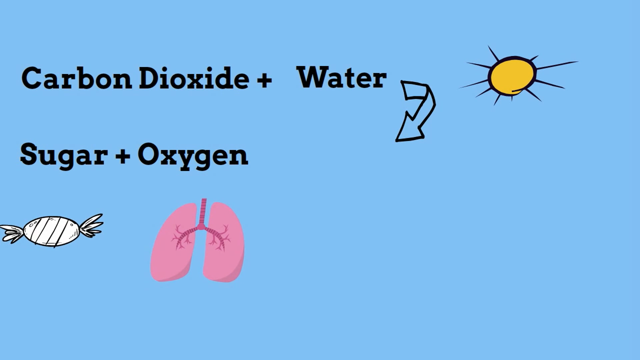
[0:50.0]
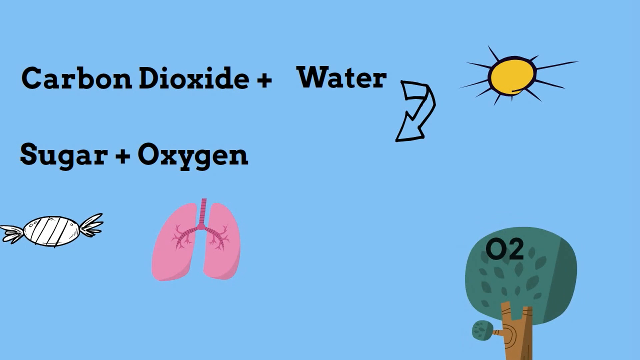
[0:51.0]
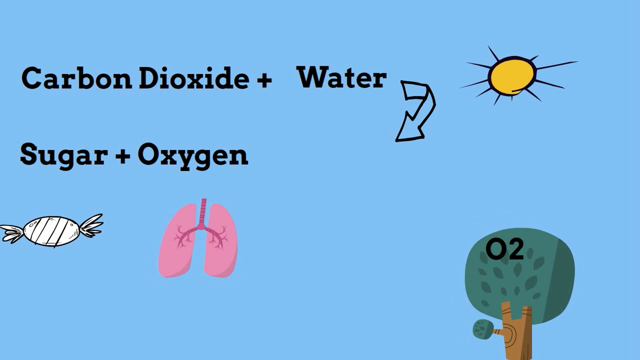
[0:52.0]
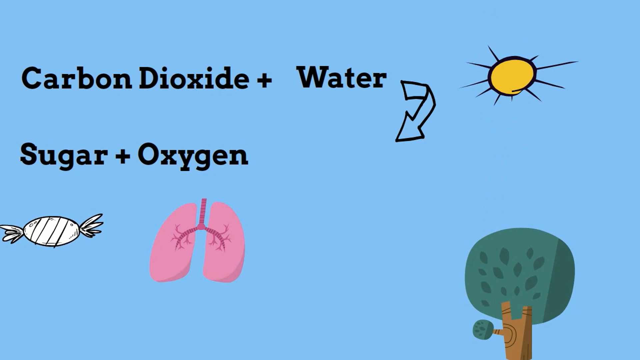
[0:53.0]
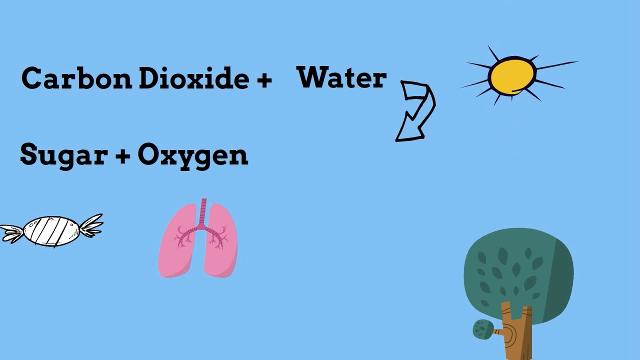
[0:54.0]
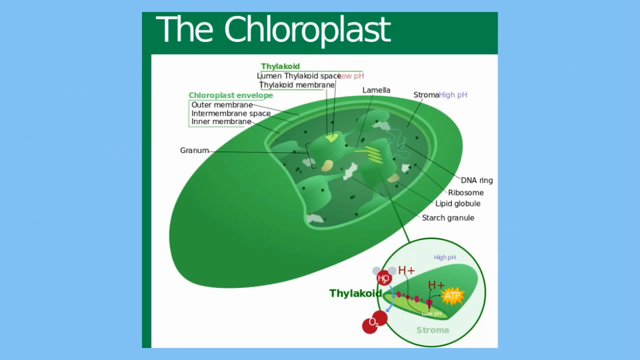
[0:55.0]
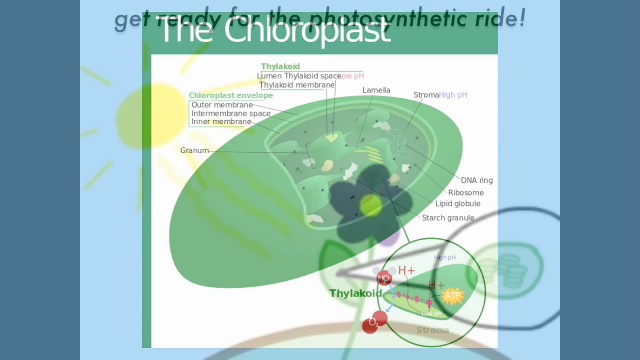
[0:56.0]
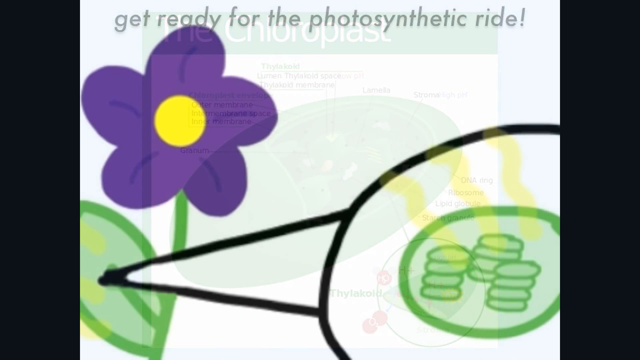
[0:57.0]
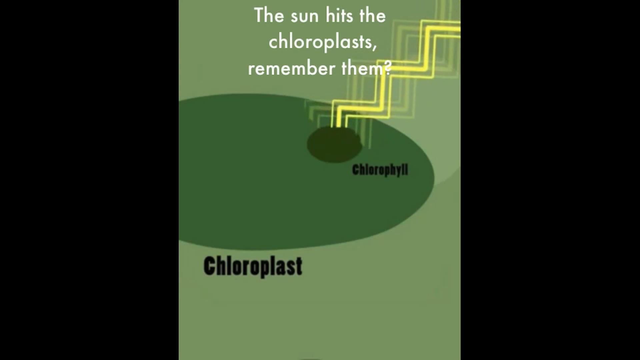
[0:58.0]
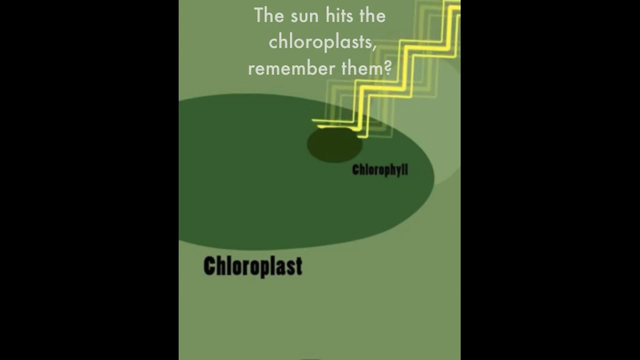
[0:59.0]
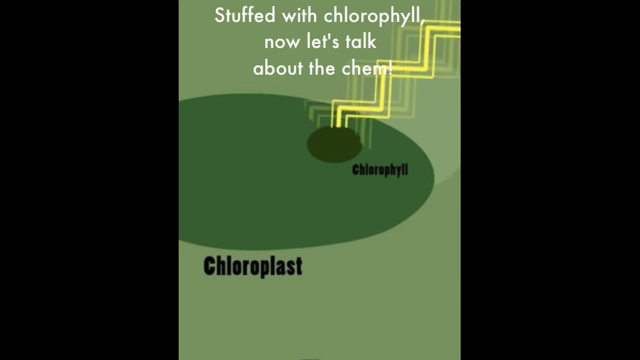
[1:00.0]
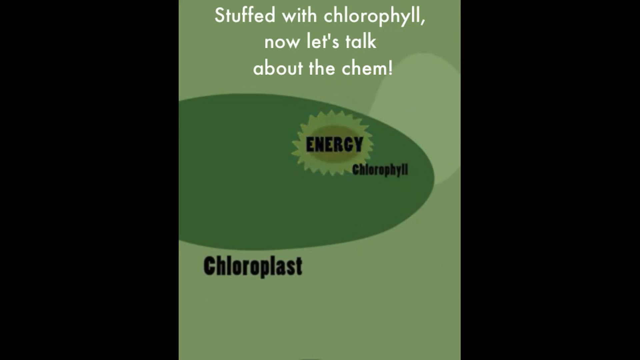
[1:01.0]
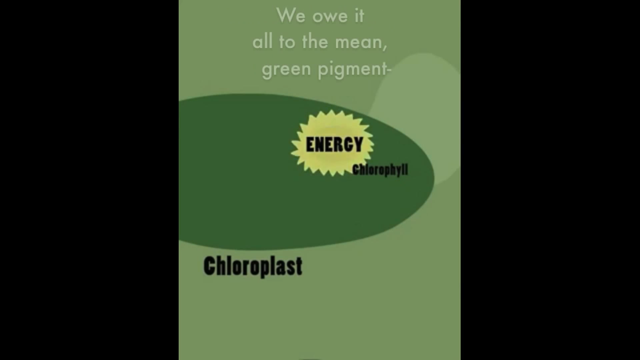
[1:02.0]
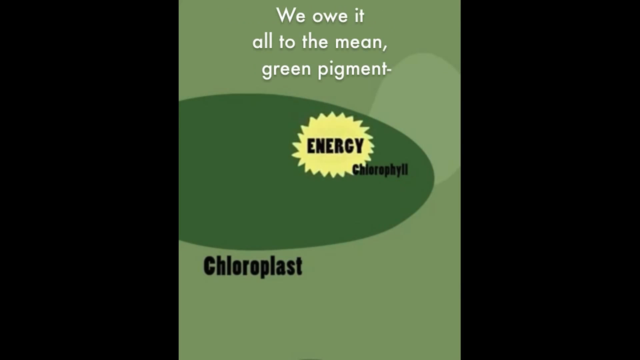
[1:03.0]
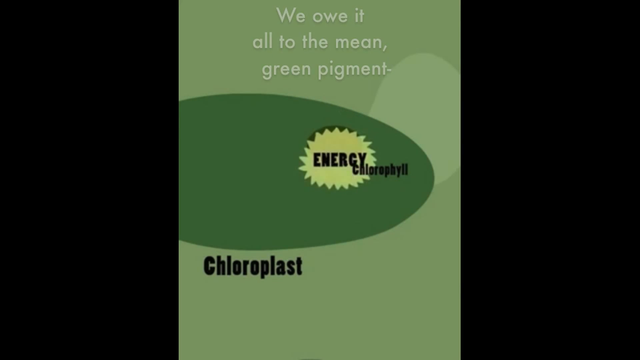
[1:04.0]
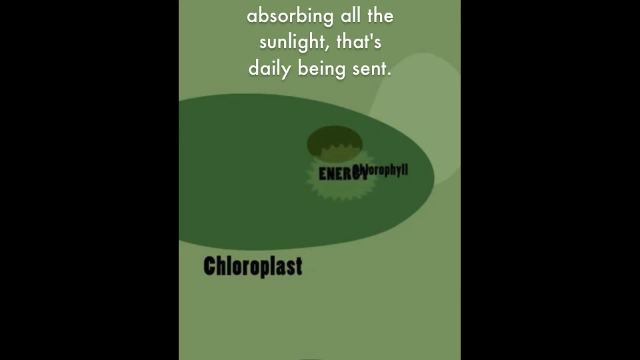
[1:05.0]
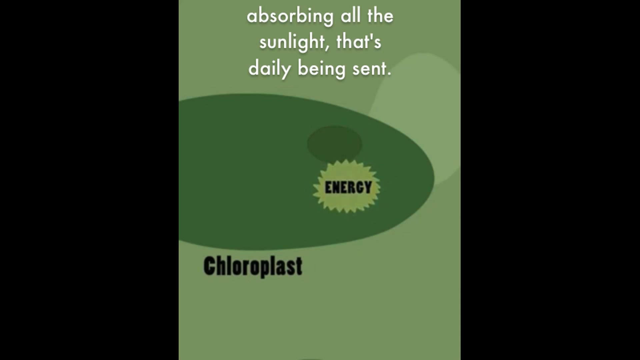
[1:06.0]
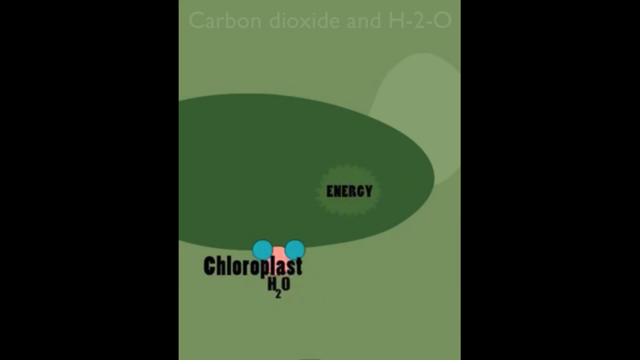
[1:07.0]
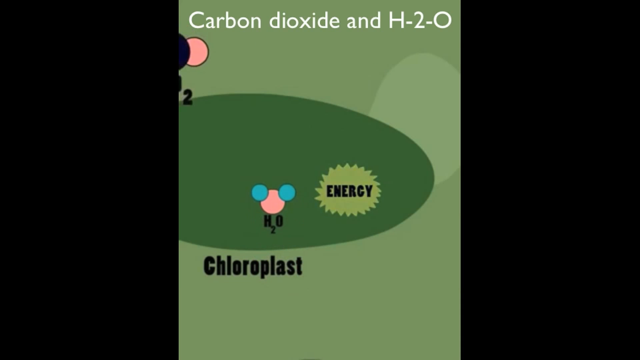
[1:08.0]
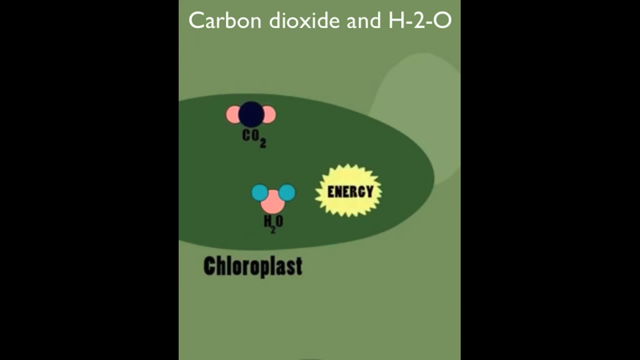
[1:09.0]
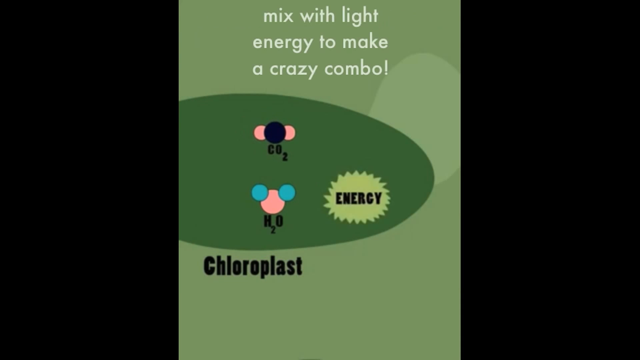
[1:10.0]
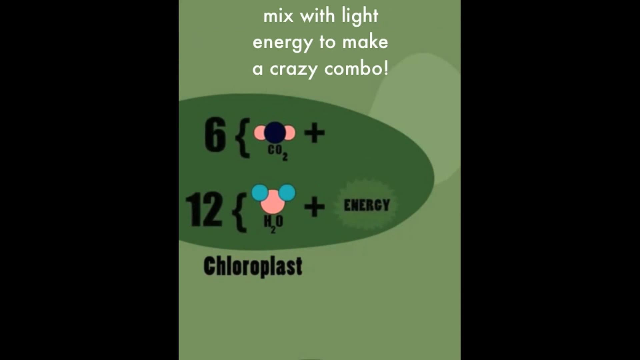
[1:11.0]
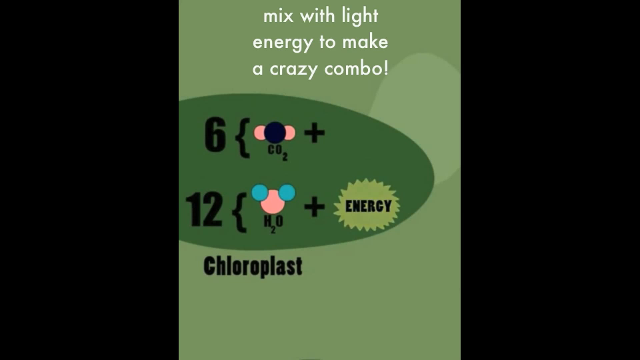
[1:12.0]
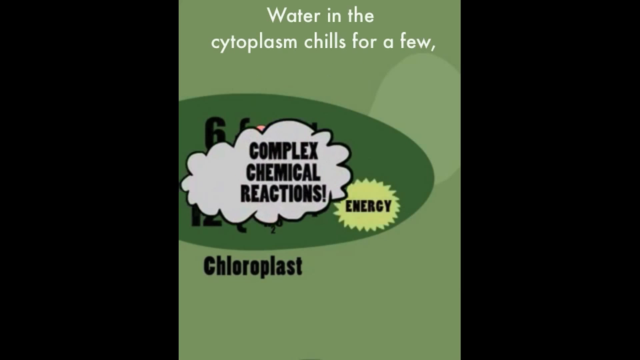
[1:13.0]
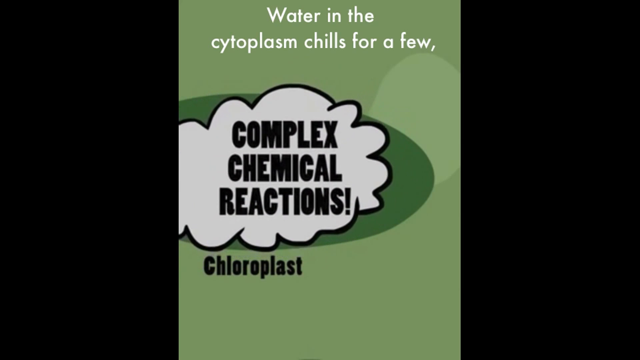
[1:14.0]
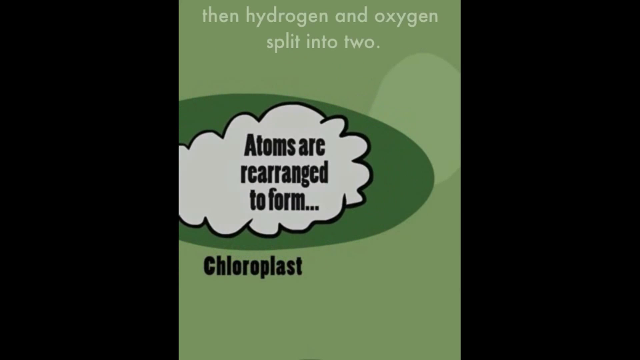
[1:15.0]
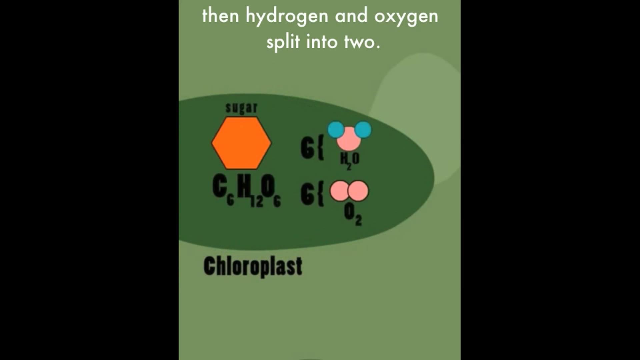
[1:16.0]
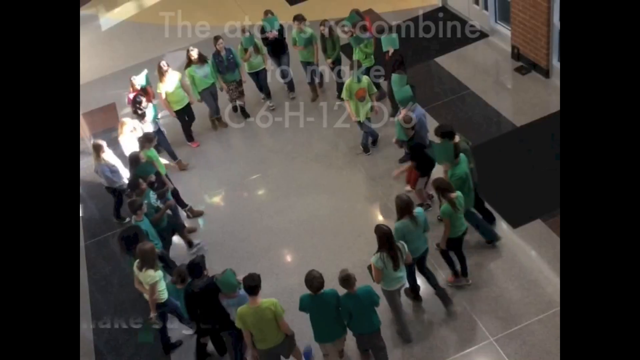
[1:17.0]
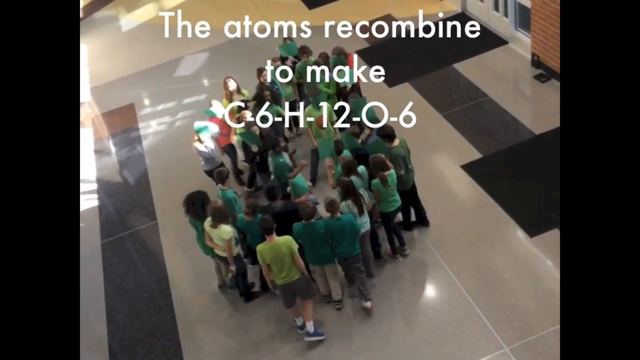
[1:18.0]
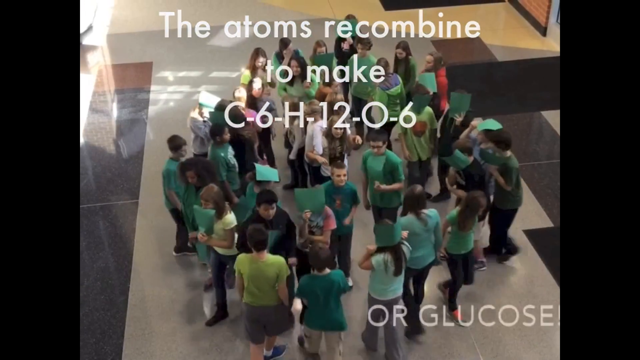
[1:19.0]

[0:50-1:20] The same page about carbon dioxide and water is on screen. This time the candy, the lungs and a new tree animation in the bottom right are all moving, shaking slightly left and right. As they keep moving, a black "O2" text comes down on top of the tree. The tree shakes a little more before the video moves to a new screen, similar to one shown before: the chloroplast diagram with the half-open structure and the names of its parts. In the bottom right it reads "thycolloid," and there is an "H+" with some red dots and some "H2O," showing different parts of the particle. The video then goes through several new graphics. One shows a chloroplast with chlorophyll inside it, with white text at the top reading "the sun hits the chloroplast. Remember them?" A sort of stair-like yellow graphic runs diagonally into it, with text about chlorophyll. That graphic goes away, and a yellow sun icon appears around a green dot with the word "energy" and yellow stars. It slowly moves down, and the text at the top changes to "absorbing all the sunlight that's daily being sent." An H2O particle comes in from the bottom and a CO2 particle comes in from the top left; a 6 appears near the CO2 and a 12 appears in the H2O, and the text at the top reads "mix with light energy to make a crazy combo." A new graphic appears with a big white cloud covering most of the middle, and then some new molecules come onto the screen.